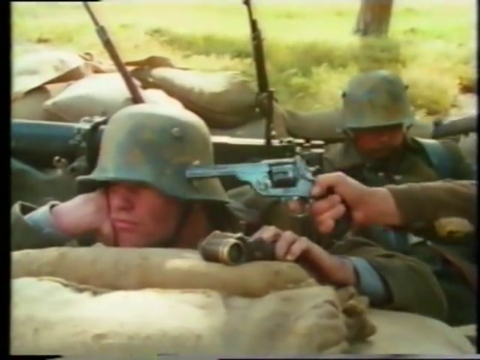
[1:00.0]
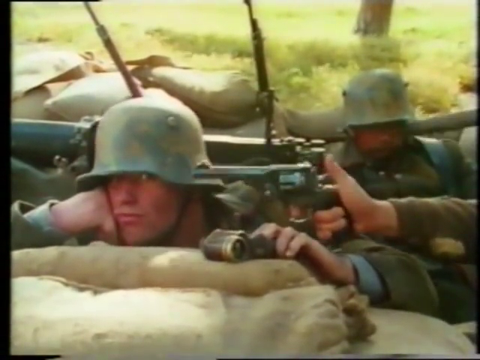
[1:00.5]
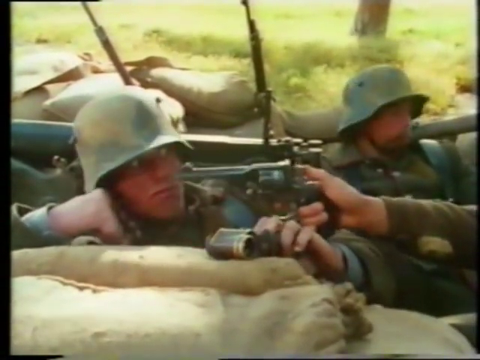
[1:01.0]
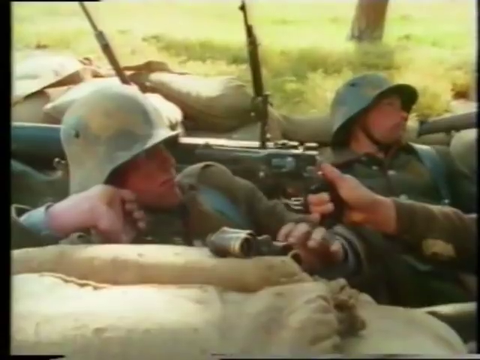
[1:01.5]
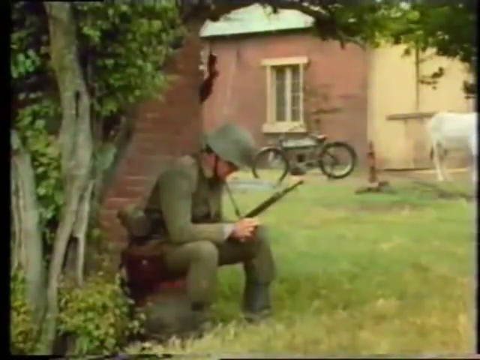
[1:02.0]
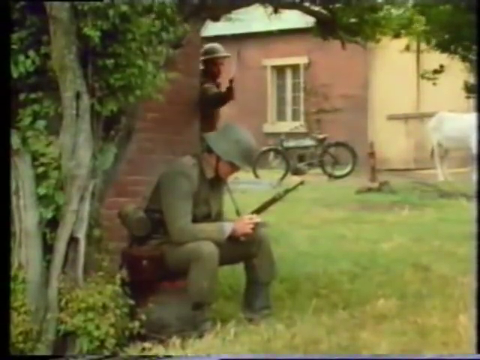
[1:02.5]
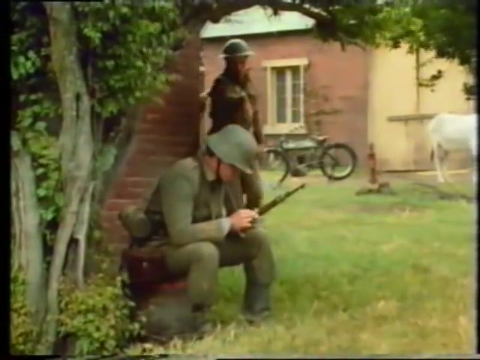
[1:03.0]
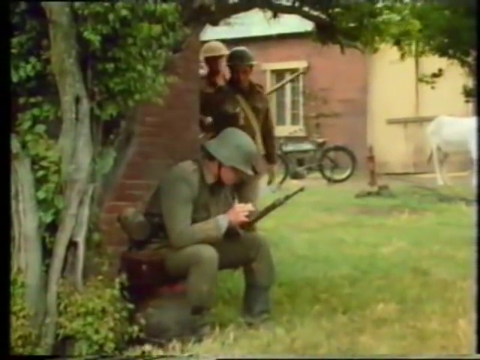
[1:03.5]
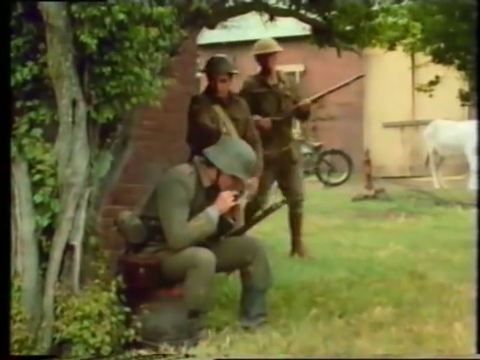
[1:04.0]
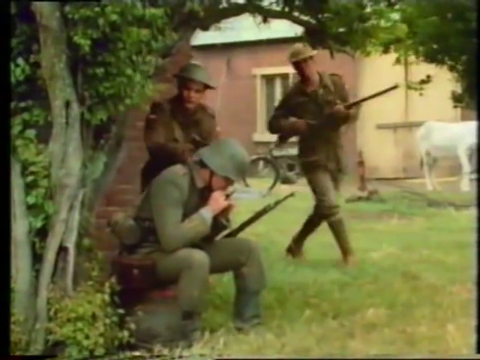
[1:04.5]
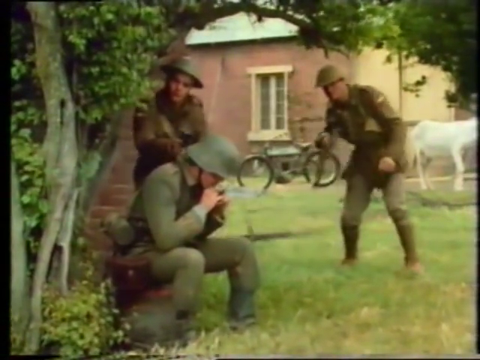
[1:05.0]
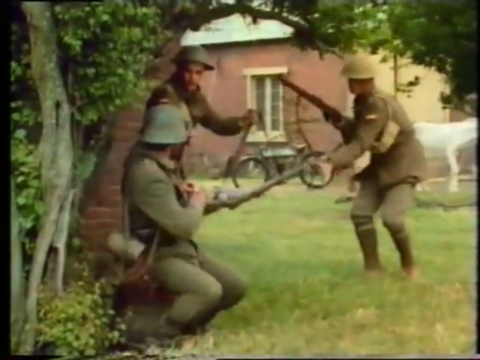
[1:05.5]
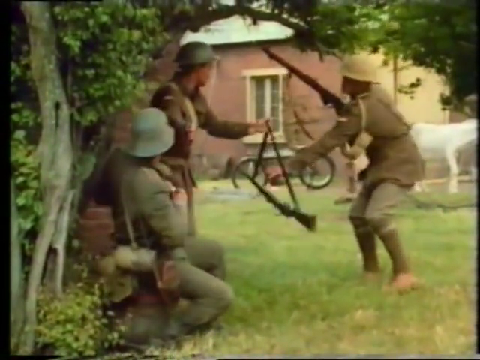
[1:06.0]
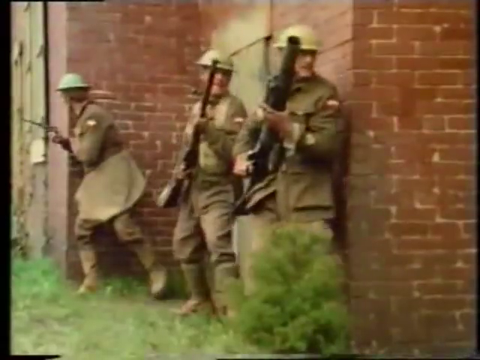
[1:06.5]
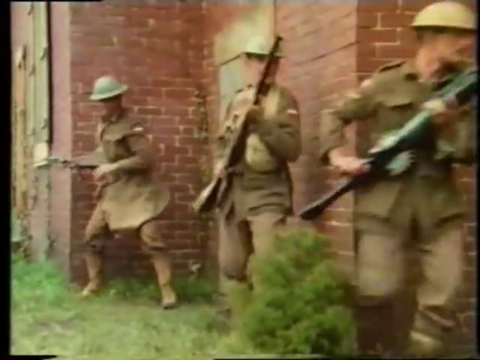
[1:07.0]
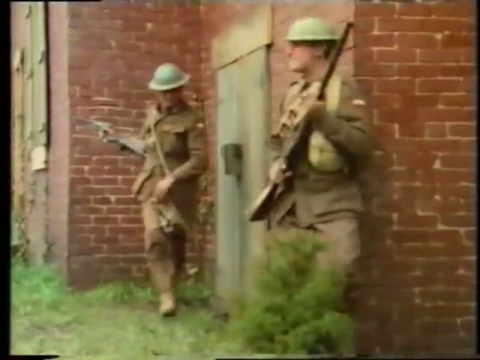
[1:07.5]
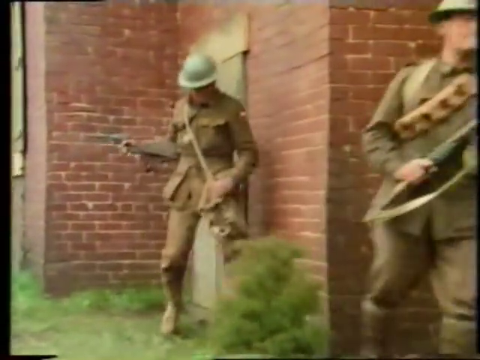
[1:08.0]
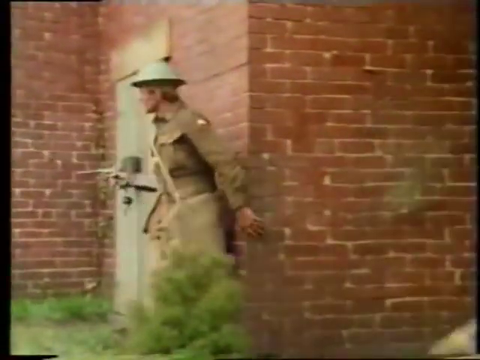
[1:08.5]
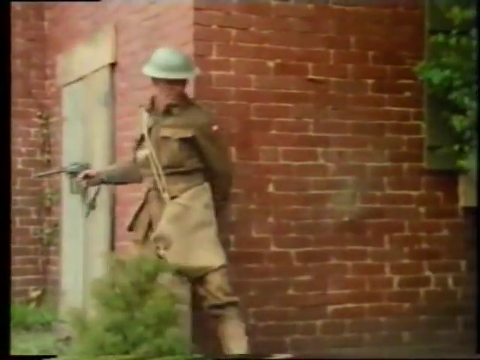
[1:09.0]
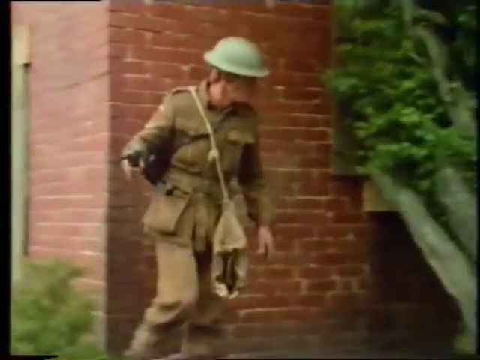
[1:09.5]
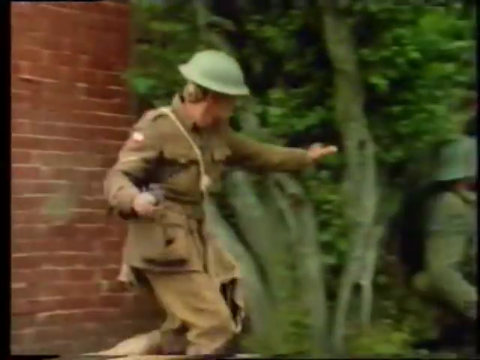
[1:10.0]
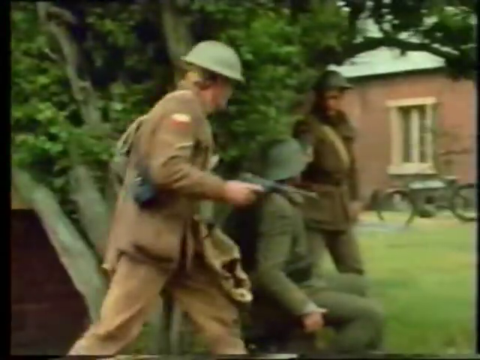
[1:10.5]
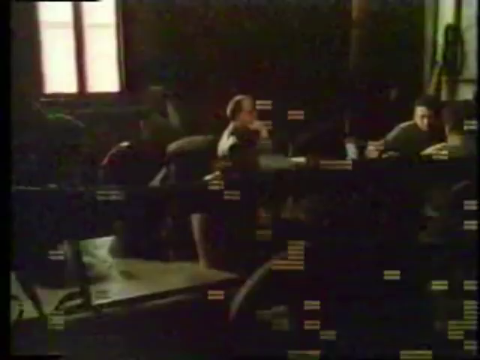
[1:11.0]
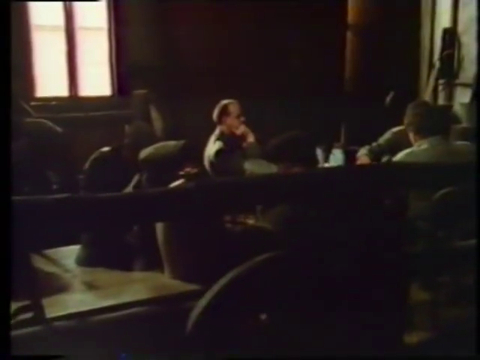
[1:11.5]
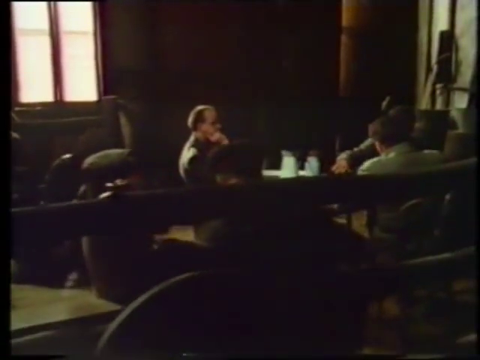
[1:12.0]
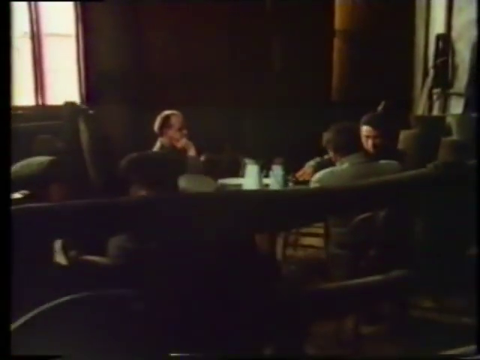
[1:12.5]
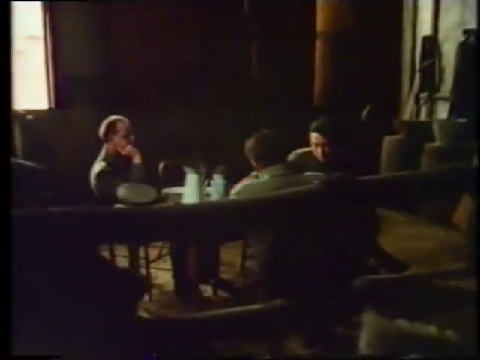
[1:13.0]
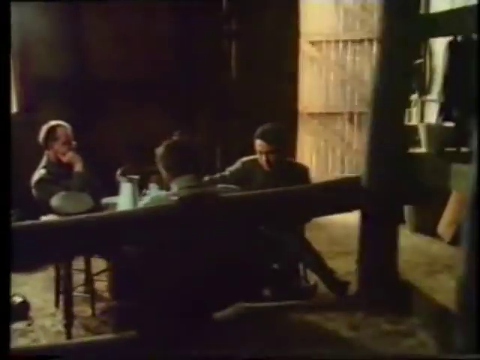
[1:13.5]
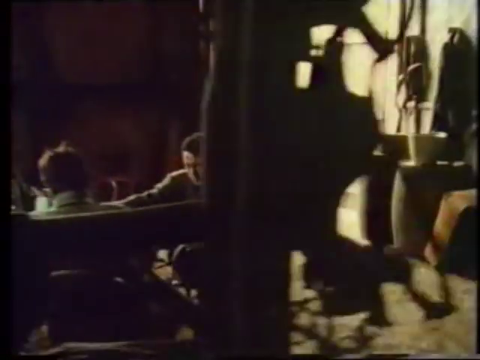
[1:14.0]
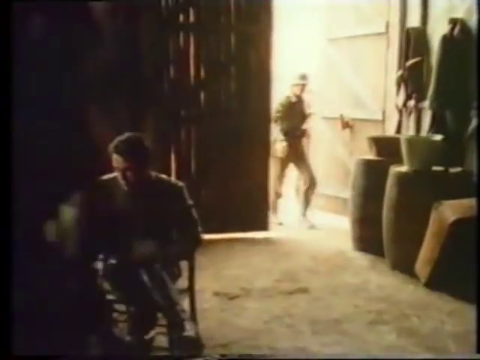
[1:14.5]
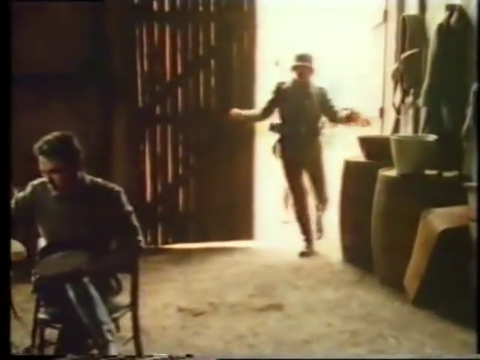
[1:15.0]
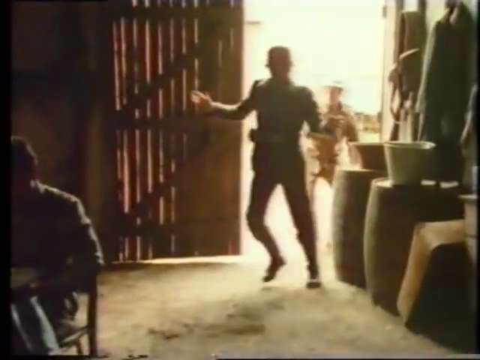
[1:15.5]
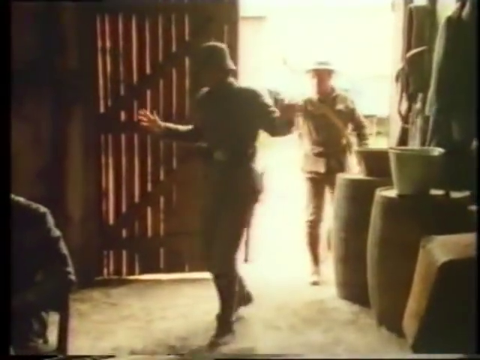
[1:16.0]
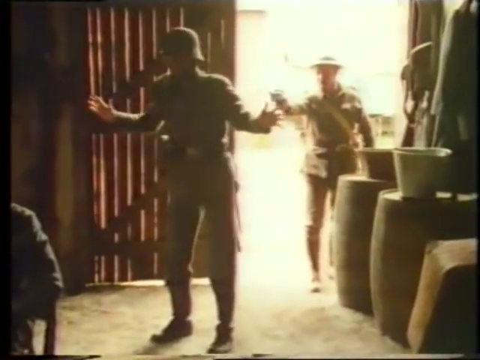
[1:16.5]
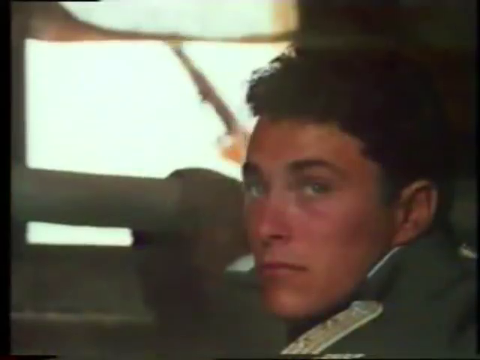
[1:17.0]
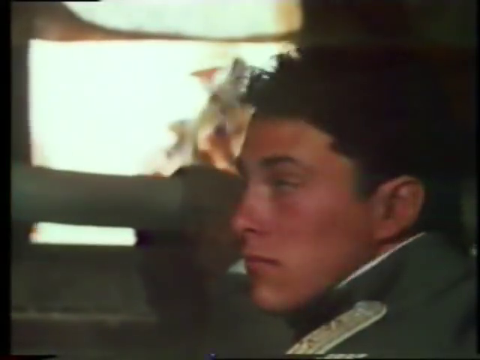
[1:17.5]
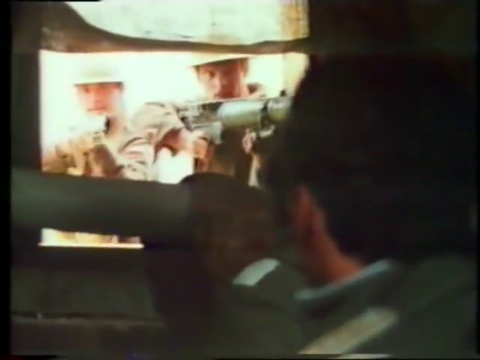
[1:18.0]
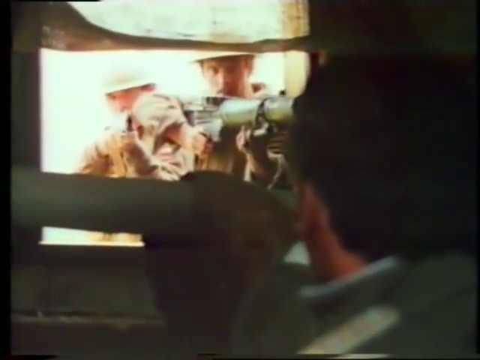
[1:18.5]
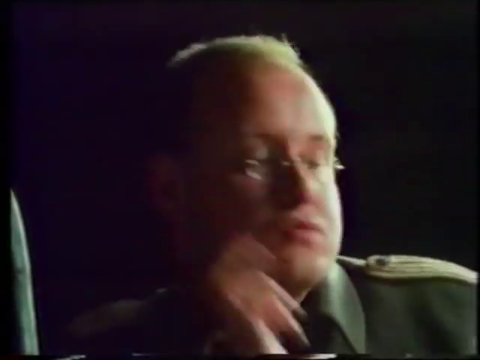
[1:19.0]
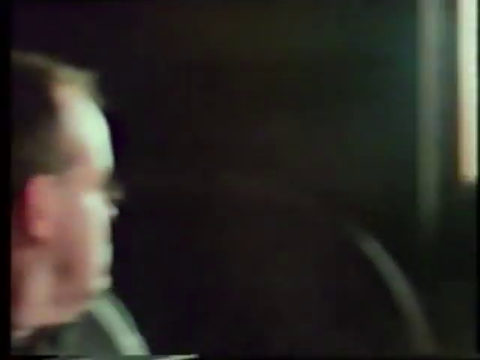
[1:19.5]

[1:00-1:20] Two military men sit in a room; one of them has a kettle of hot boiling water and pours it into a cup. In another scene, a military man sits outdoors and a man in uniform comes and points a gun at him. Next, an army man sits in a grass field while two other army men come from behind; both point guns at him and one takes away his weapon. In another scene, a military man hides behind a brick wall, carrying a bag. Next, two military men walk into a hall where two other military men are seated; one of the seated men takes out his gun and points it at one of the men walking in. In another scene, a man sits in a dark room while a military man points a gun at him through the window.